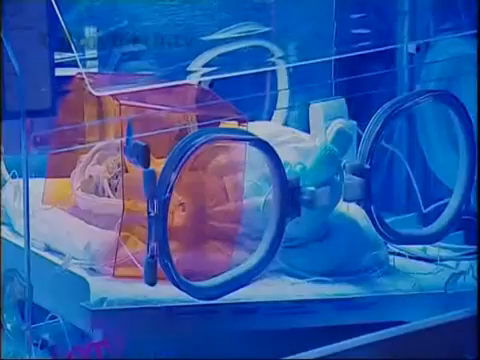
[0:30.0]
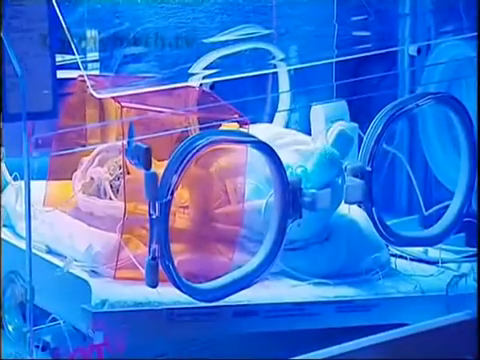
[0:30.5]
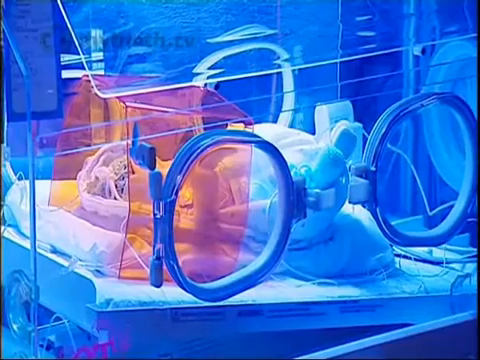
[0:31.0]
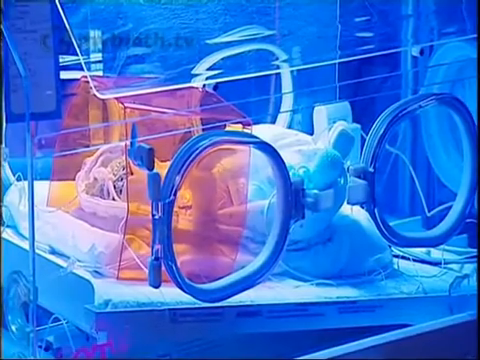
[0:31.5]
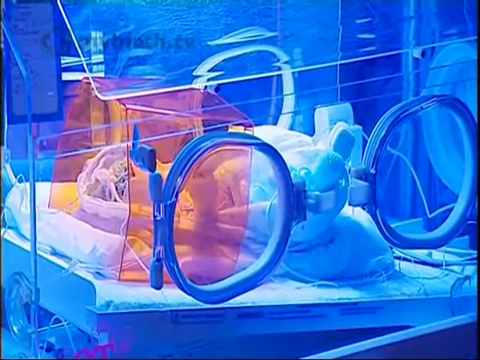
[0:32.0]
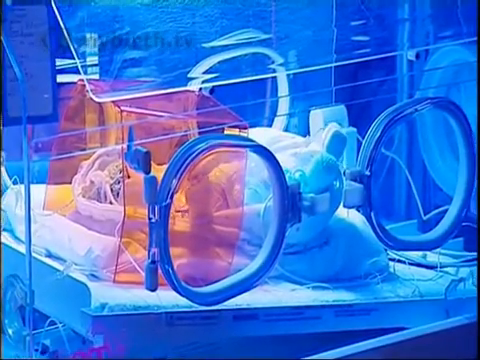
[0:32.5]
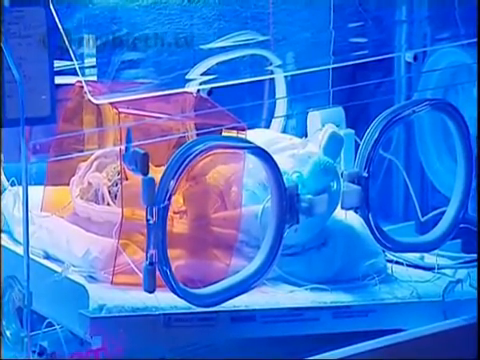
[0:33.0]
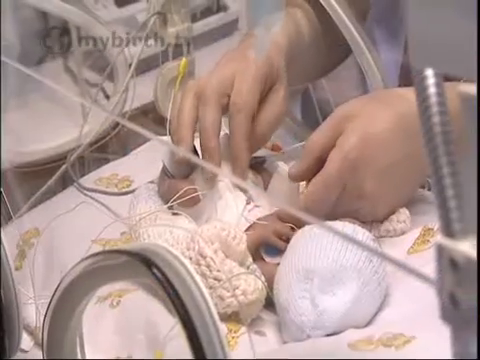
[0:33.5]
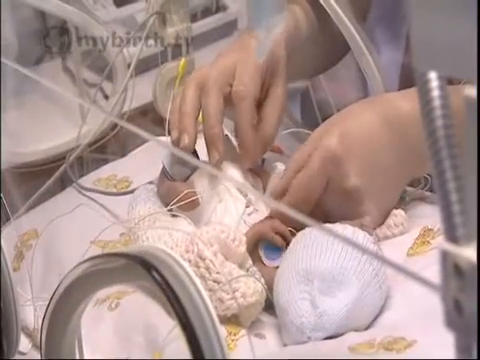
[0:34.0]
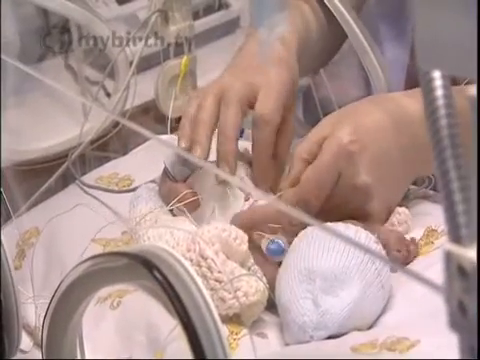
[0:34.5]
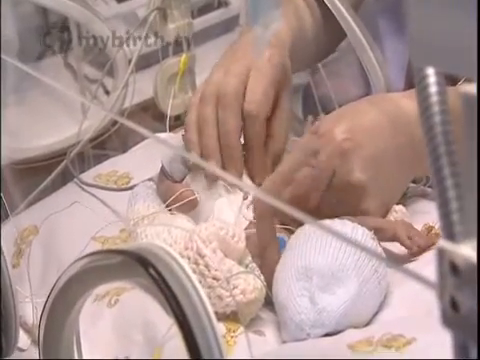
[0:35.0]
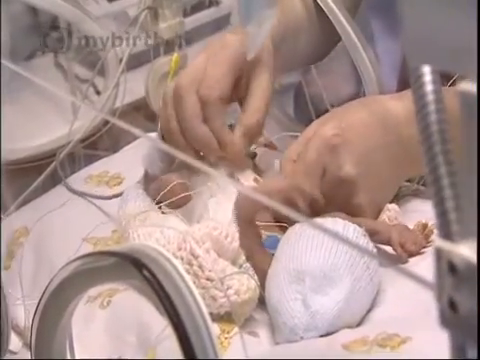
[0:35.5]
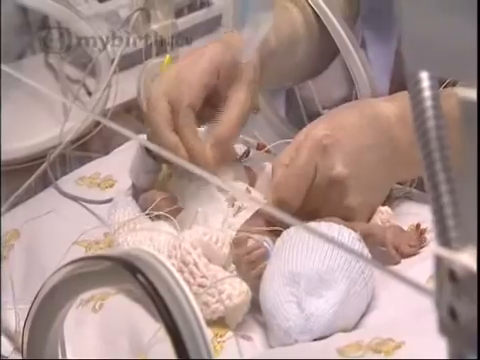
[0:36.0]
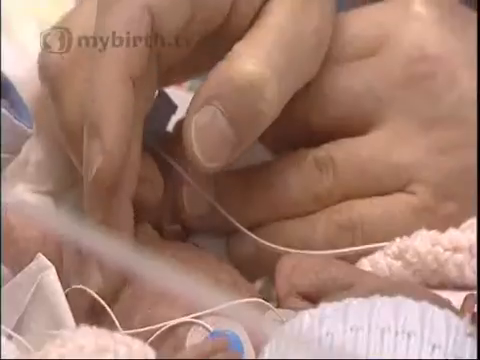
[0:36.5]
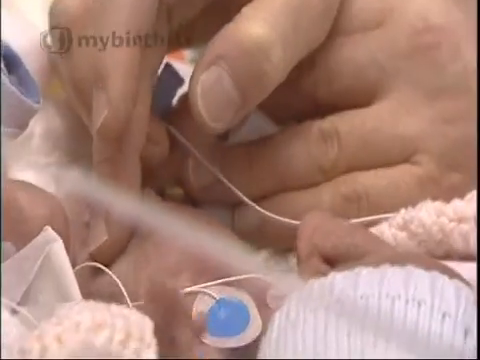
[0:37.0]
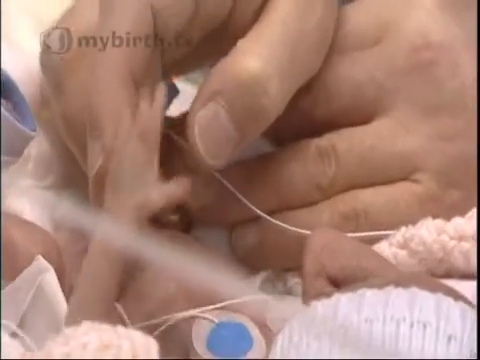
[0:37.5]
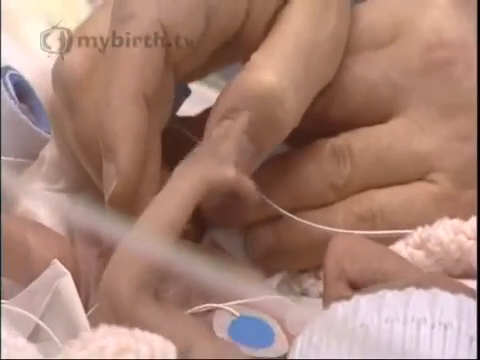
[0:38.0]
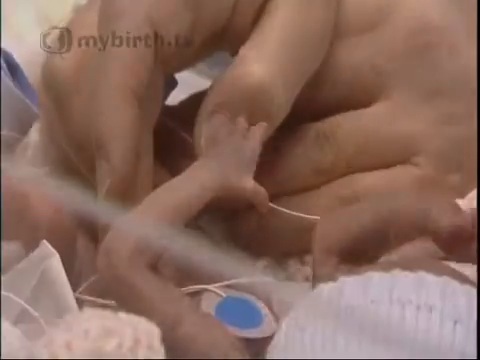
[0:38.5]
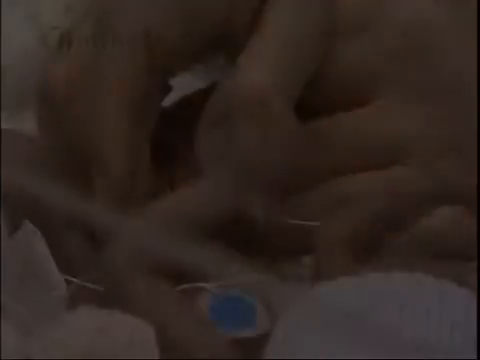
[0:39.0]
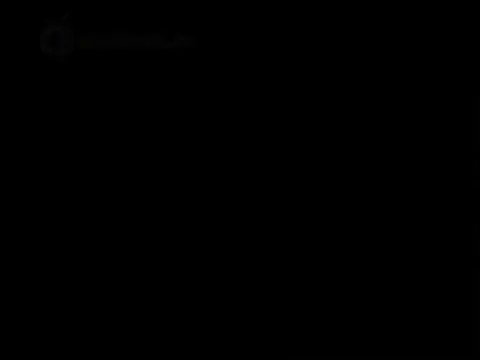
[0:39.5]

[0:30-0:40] A baby is shown inside a blue box, being taken care of after being born. The next shot shows a normally colored box. The blanket underneath the baby has animals on it. The baby is very small and skinny, with a white bonnet and wool around it, like a wool jacket. A nurse takes care of the baby, checking its vitals and slightly pressing against its abdomen. There are a bunch of wires around the baby.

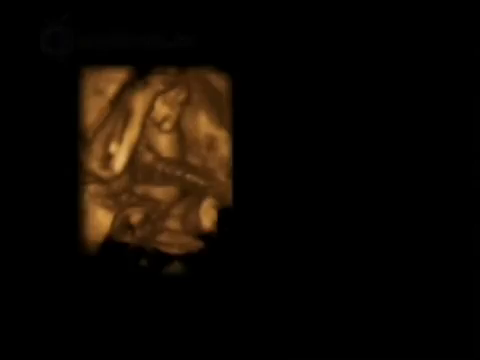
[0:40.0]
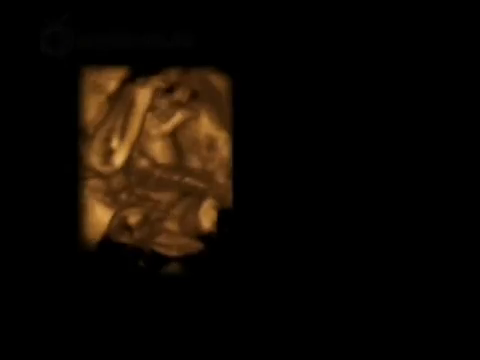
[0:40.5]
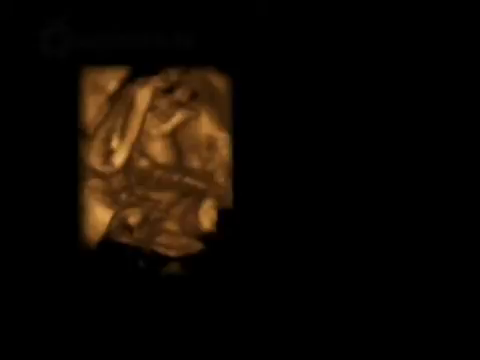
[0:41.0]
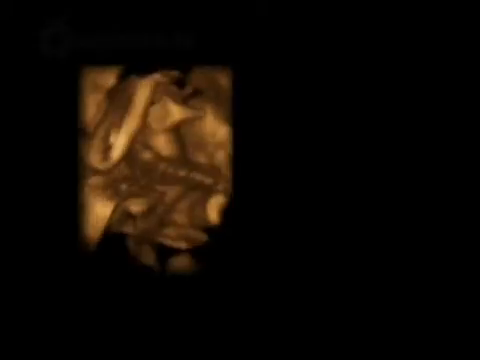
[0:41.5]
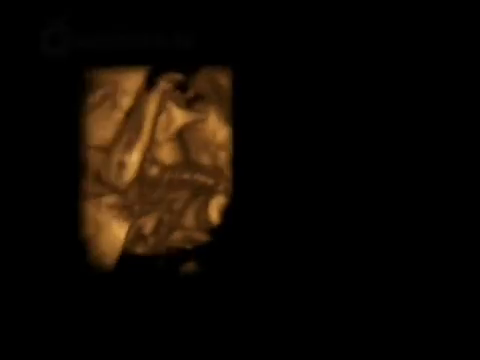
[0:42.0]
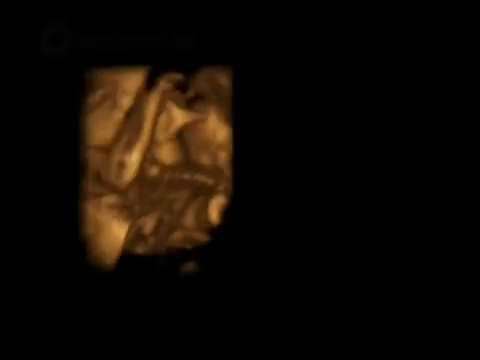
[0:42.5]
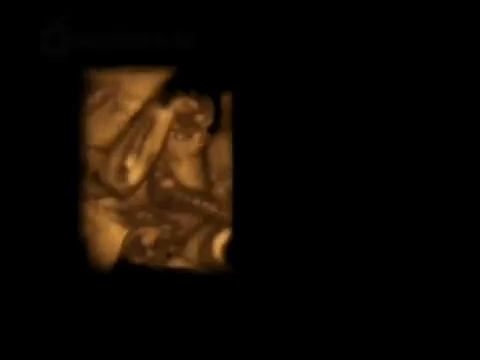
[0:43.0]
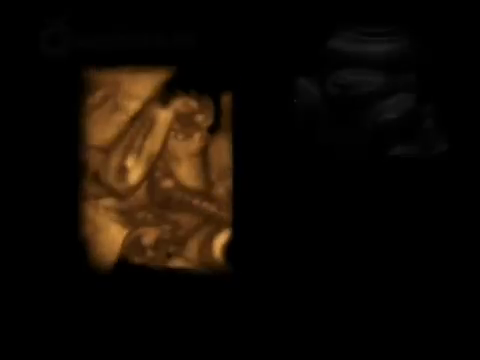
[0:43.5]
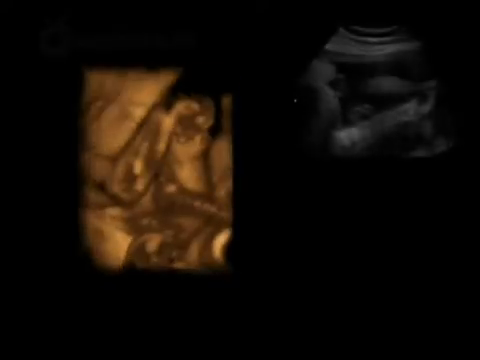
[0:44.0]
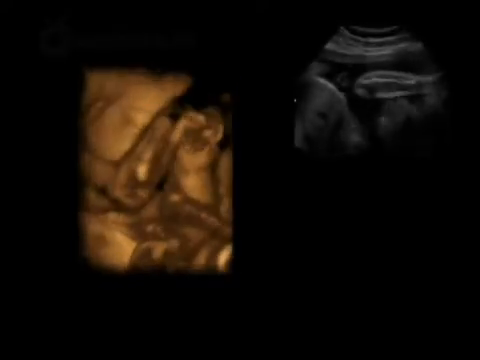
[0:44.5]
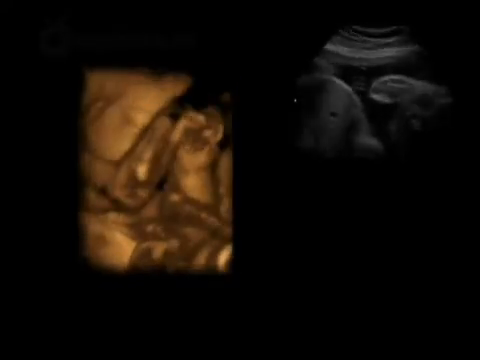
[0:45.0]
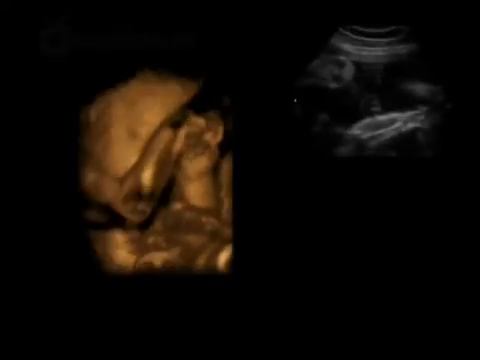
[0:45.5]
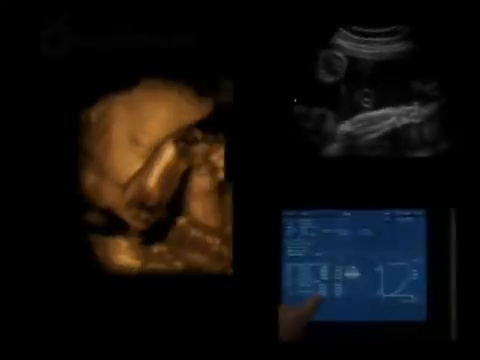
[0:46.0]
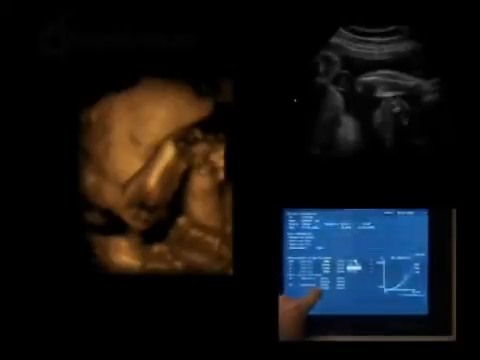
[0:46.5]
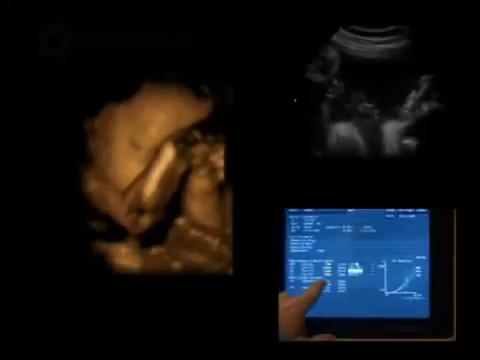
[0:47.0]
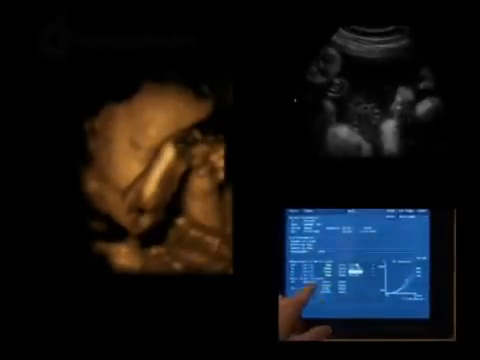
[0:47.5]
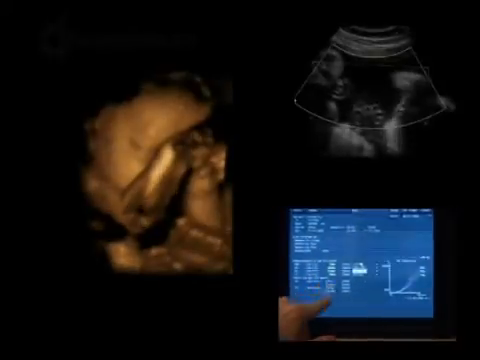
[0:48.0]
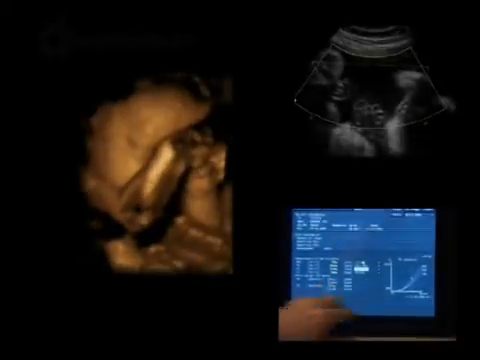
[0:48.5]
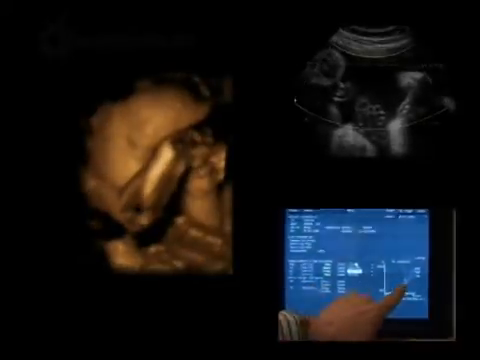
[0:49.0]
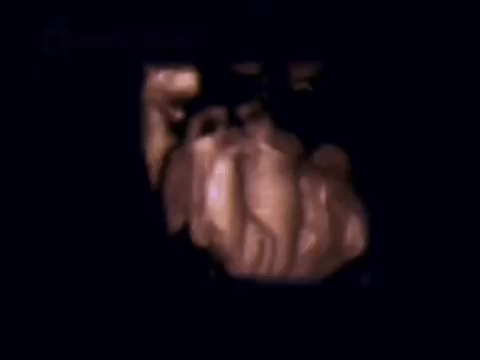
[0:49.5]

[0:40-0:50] A yellow-tinted ultrasound is shown; it is very convoluted and looks like it may be the inside of the uterus where the baby is, with a lot of tubing or the baby's arms in the way, and the ultrasound does not seem to render all parts of the baby properly. Another ultrasound image then appears, a normal black and white one, in which the baby is moving a lot and is a lot bigger. Another screen is blue-tinted with a lot of different information and data on it, and someone points with their left hand at different charts and data on the screen.